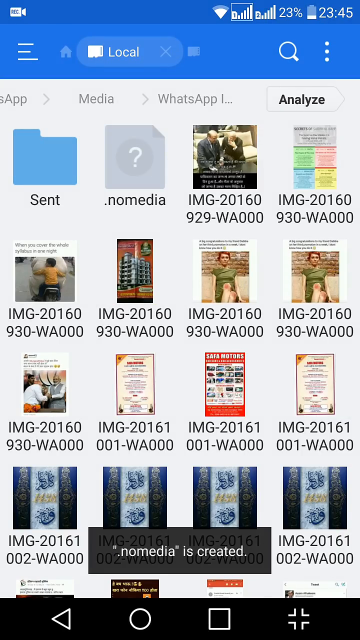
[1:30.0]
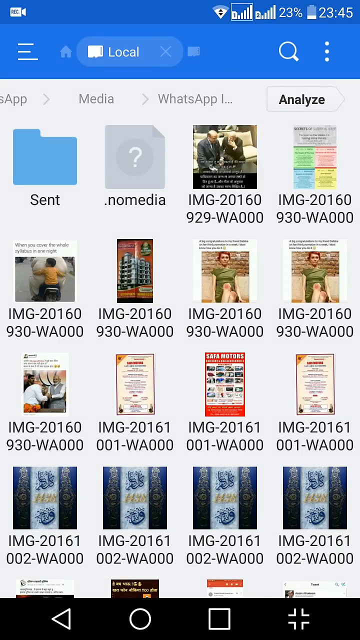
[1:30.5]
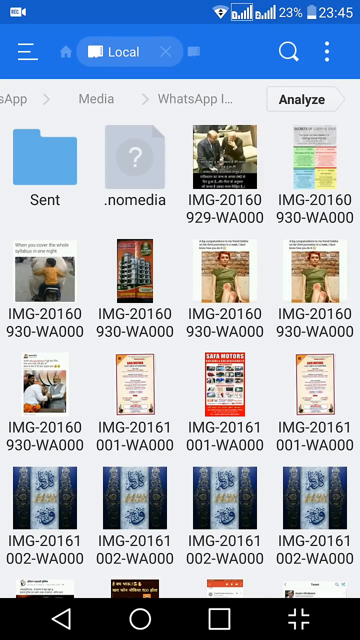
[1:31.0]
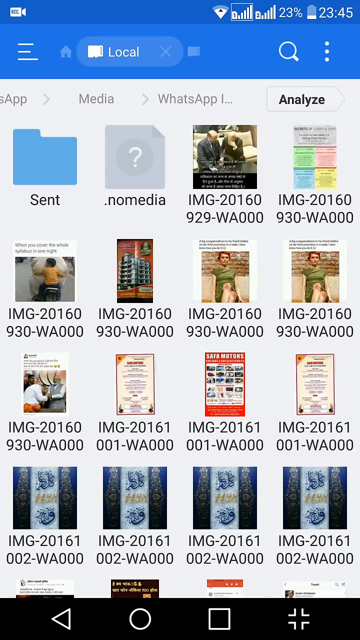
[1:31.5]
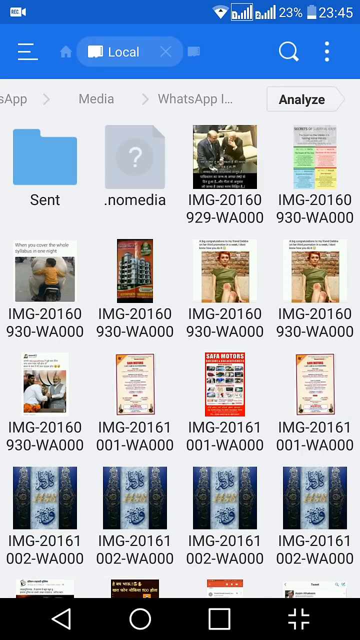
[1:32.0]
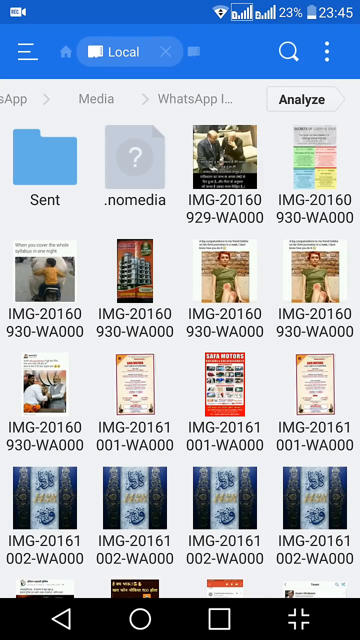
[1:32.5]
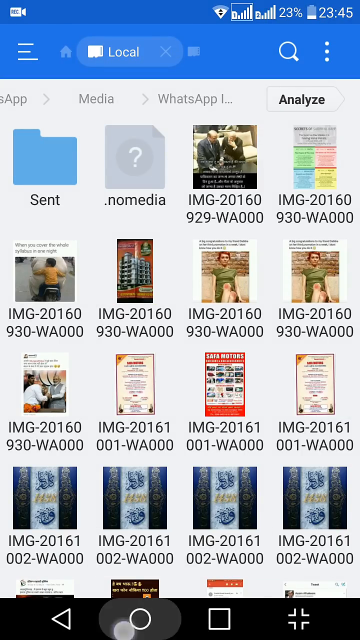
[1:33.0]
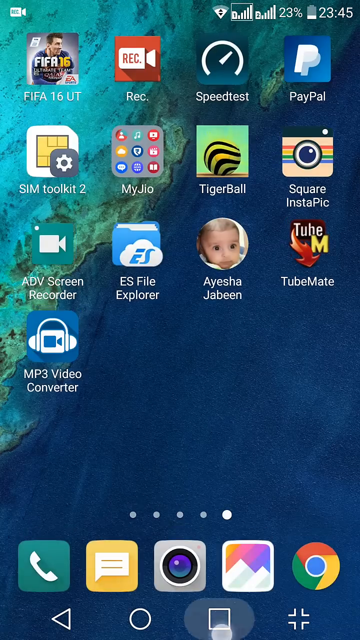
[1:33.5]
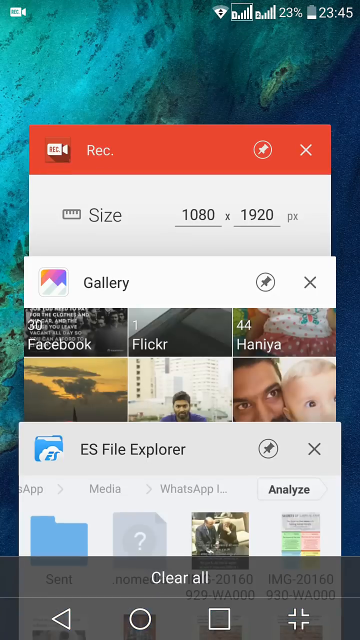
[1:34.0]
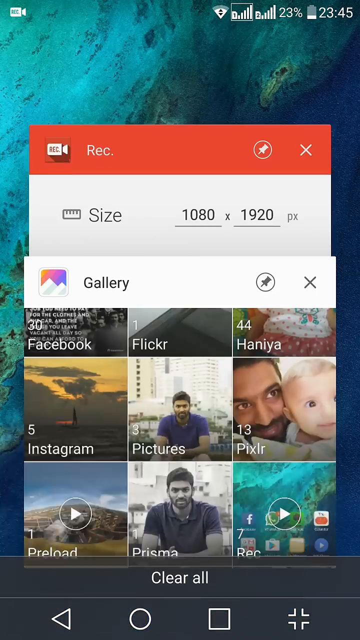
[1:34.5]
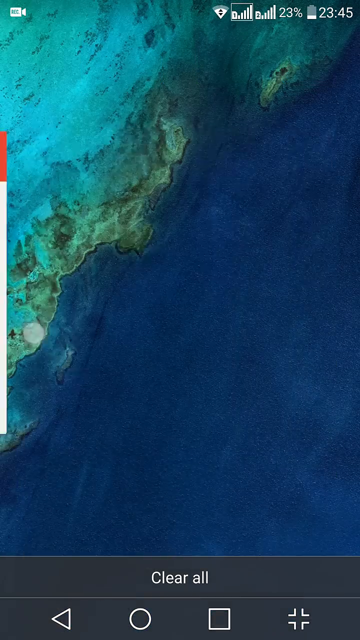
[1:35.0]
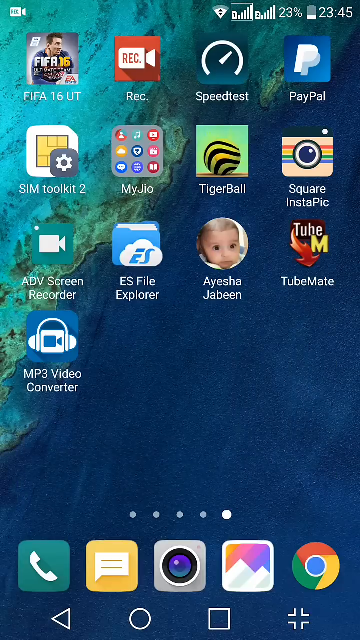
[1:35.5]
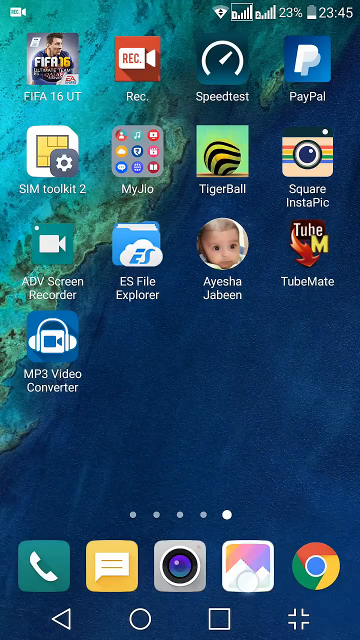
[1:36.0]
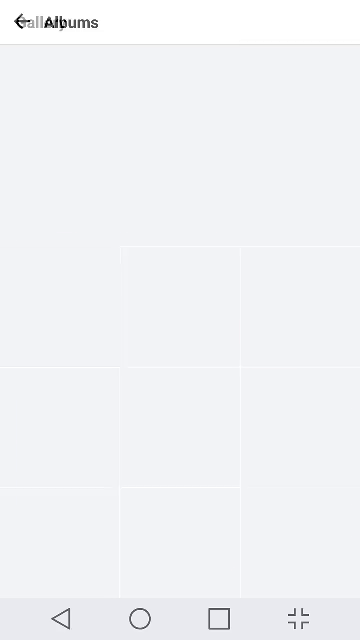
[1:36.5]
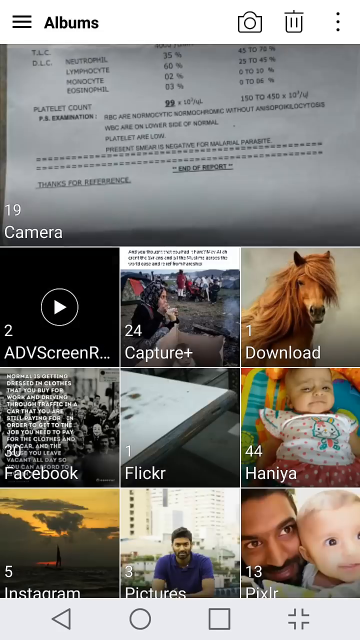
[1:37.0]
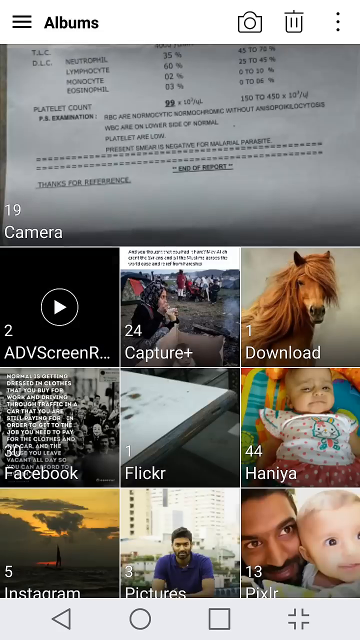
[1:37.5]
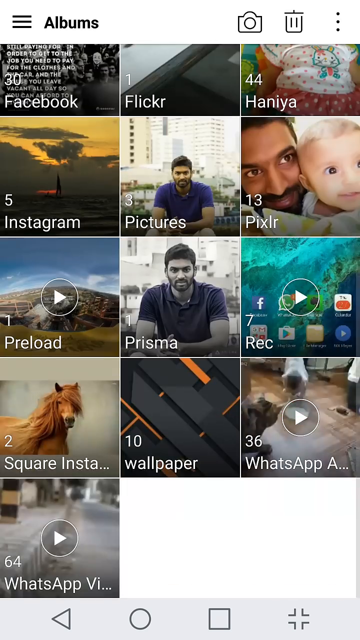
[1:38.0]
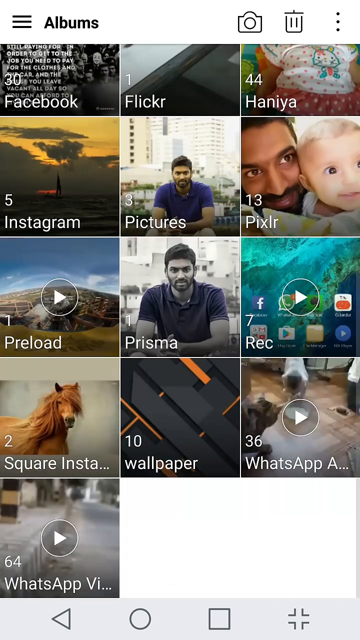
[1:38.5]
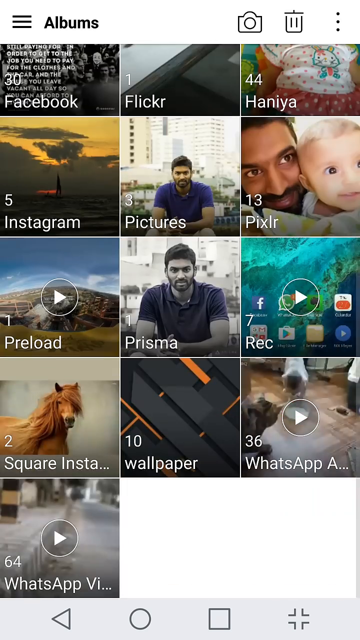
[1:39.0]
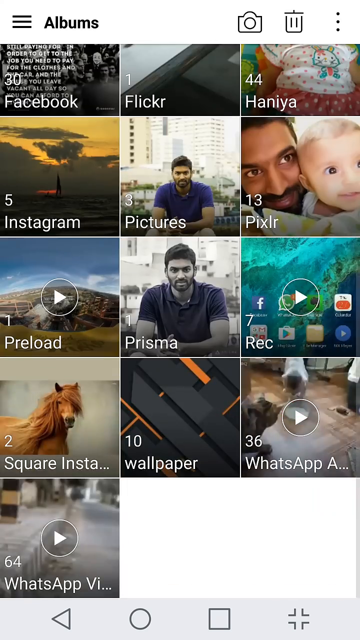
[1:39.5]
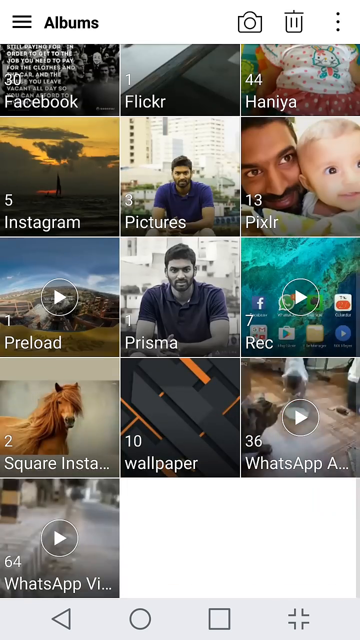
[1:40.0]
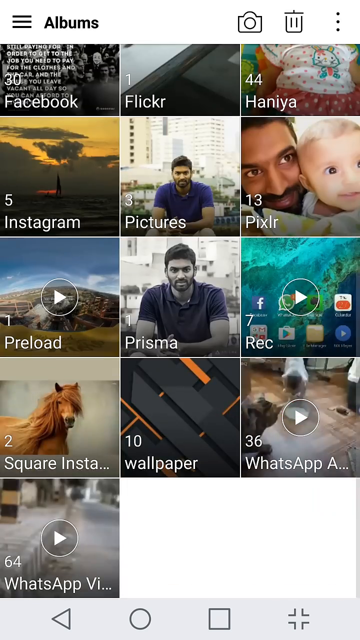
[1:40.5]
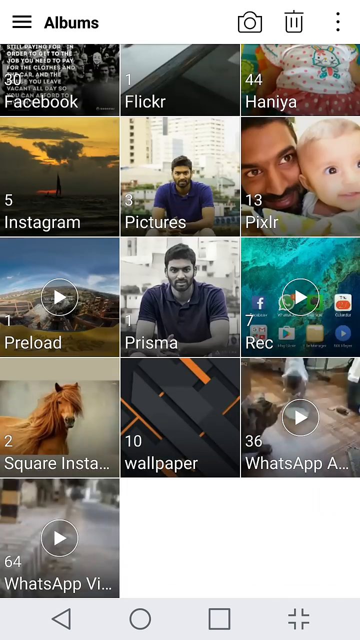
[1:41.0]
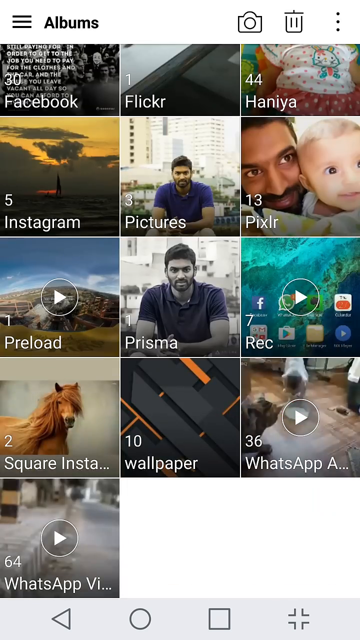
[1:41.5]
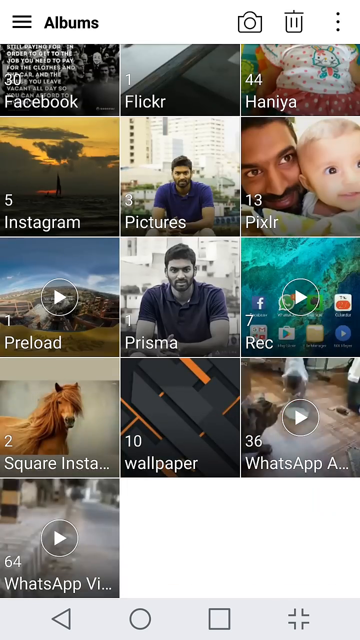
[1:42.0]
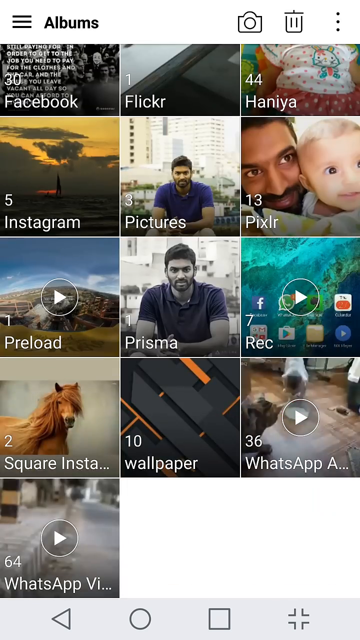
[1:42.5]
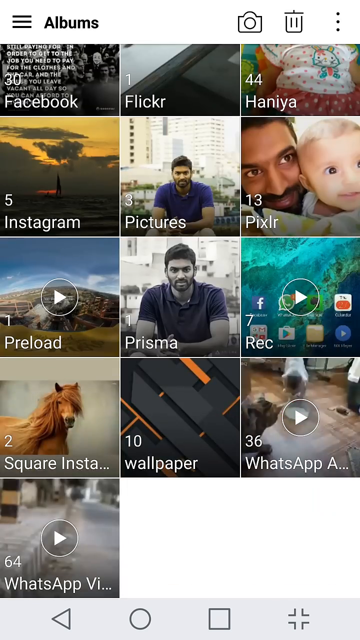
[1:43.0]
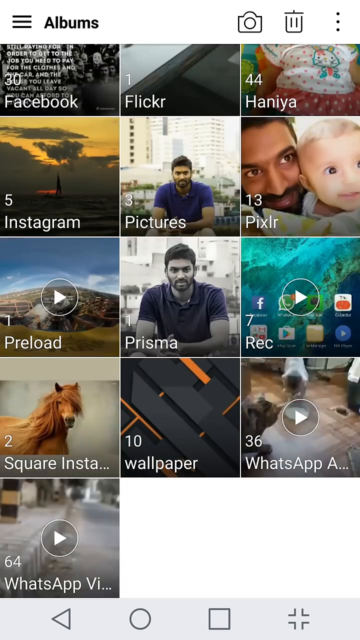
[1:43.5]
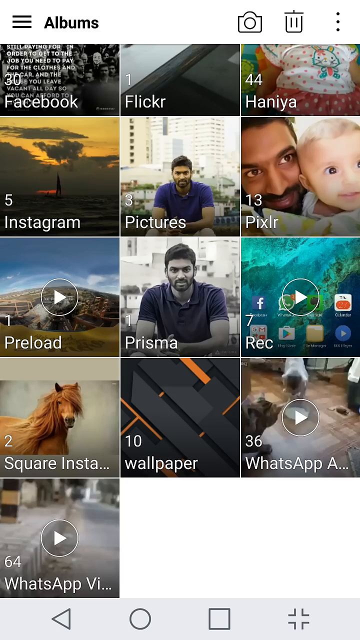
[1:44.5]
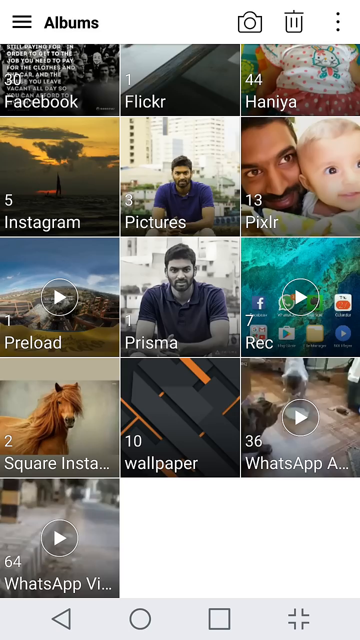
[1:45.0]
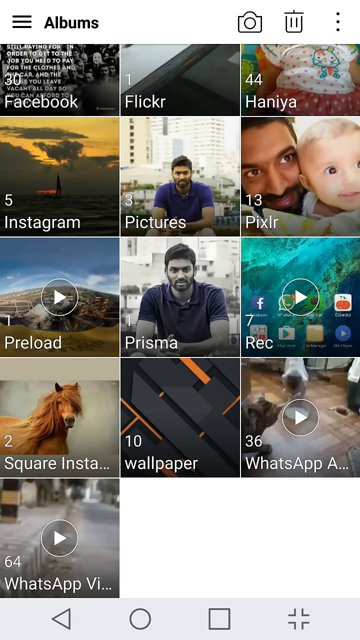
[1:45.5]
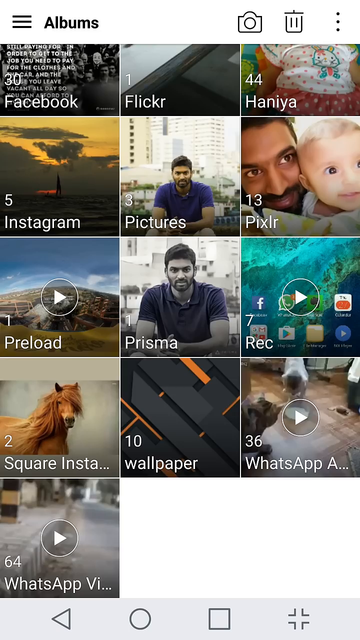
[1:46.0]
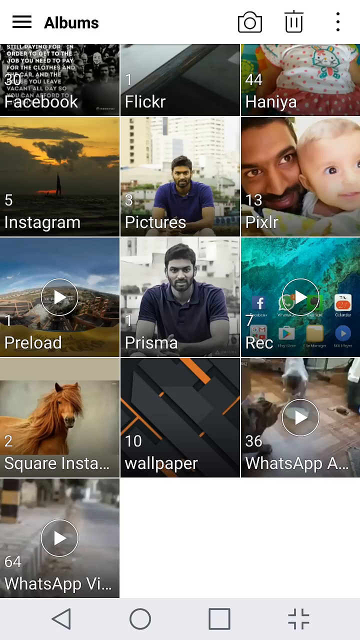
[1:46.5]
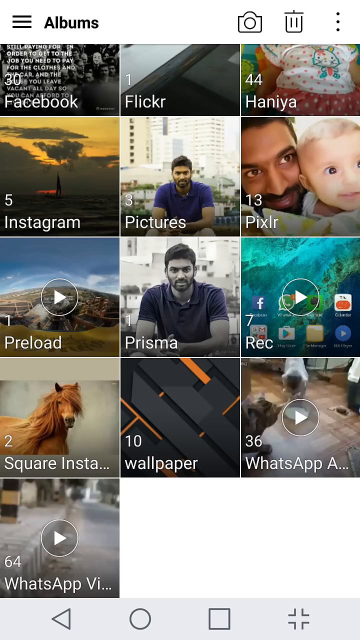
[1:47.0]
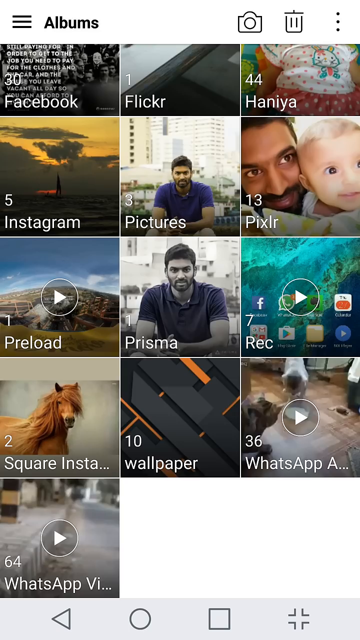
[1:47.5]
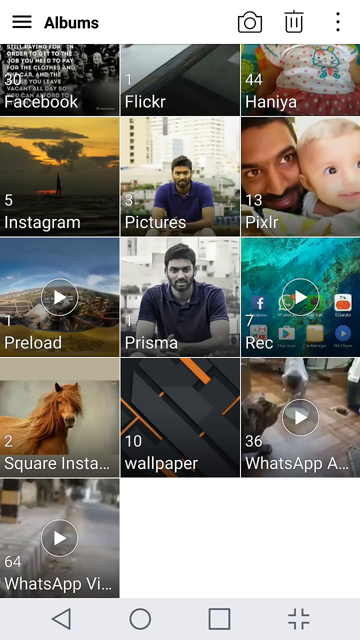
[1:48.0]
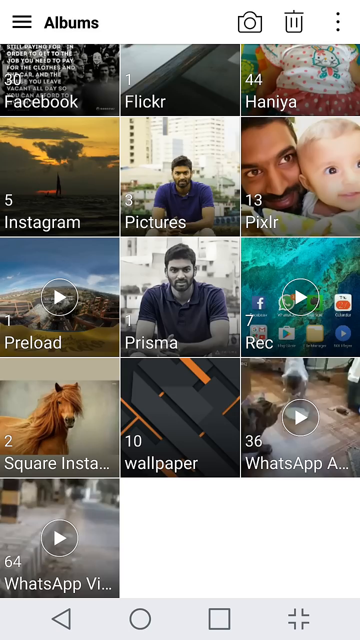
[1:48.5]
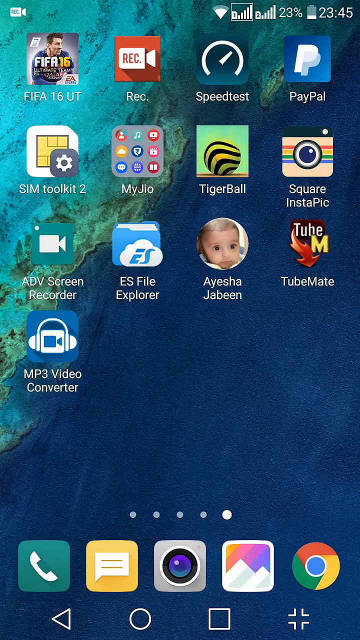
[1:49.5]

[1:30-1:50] The time in the upper right-hand corner now reads 23.45, 11:45, fifteen minutes before midnight. At the bottom, white text reads "no media is created", showing a new file has been made. The person exits the gallery and everything else. Another popup reading "camera" appears, and they go back down to roughly where they were before. Preload, Prisma, REC, Square and Insta are visible, along with a horse in about two images. After they exit that, the no media label appears with a white question mark on a black background. On the left side is a blue folder, and on the other side are blurry images; on the right side of one, two people are sitting down, but their faces and what they are doing cannot be made out. There may also be words on it that are unreadable.